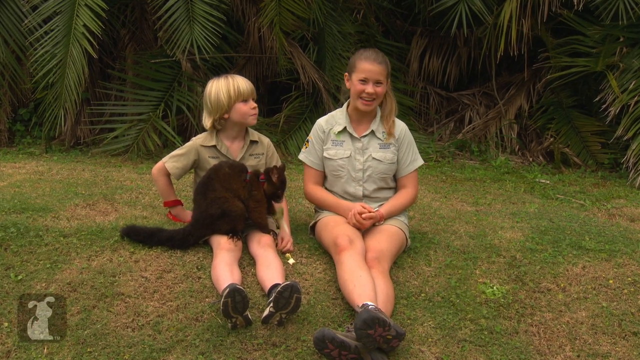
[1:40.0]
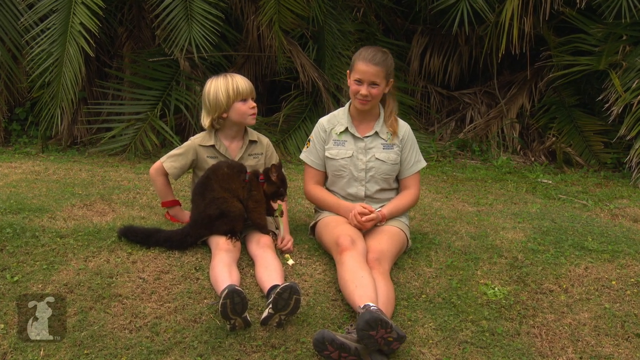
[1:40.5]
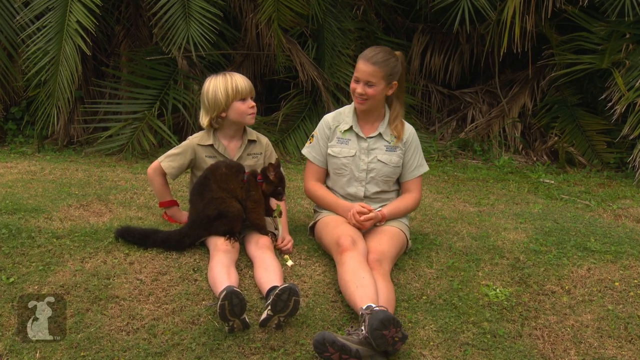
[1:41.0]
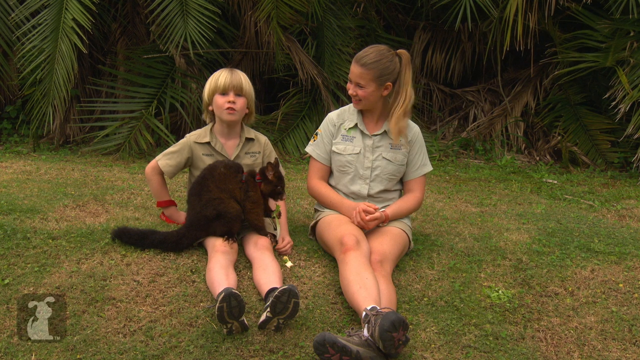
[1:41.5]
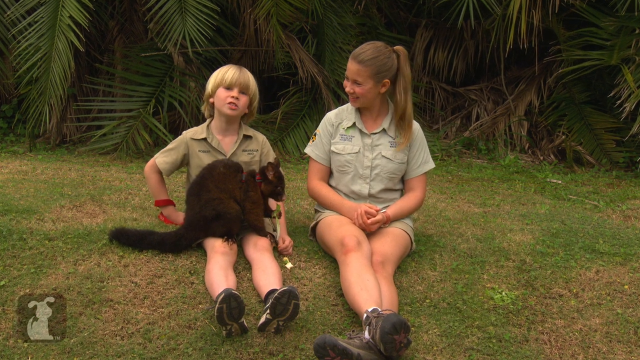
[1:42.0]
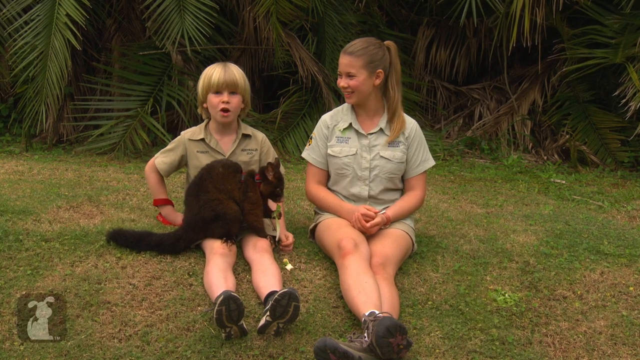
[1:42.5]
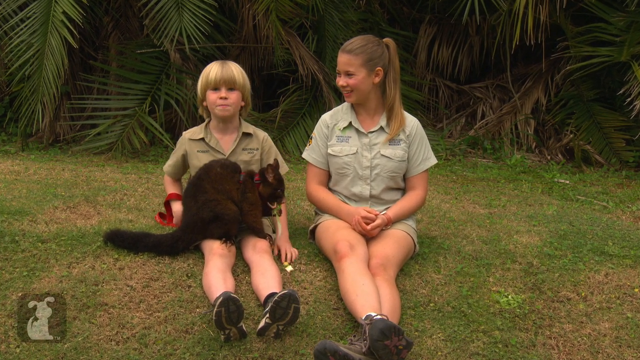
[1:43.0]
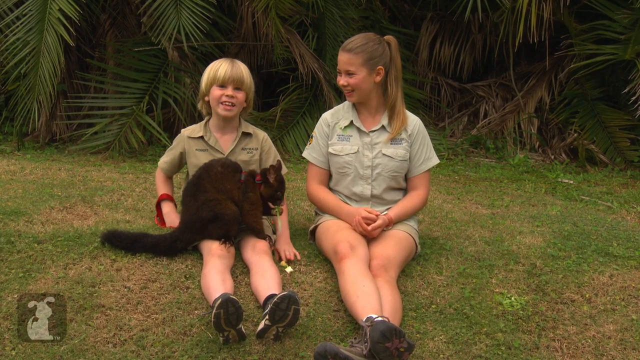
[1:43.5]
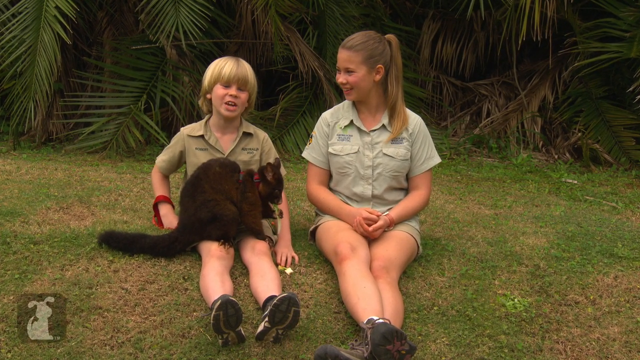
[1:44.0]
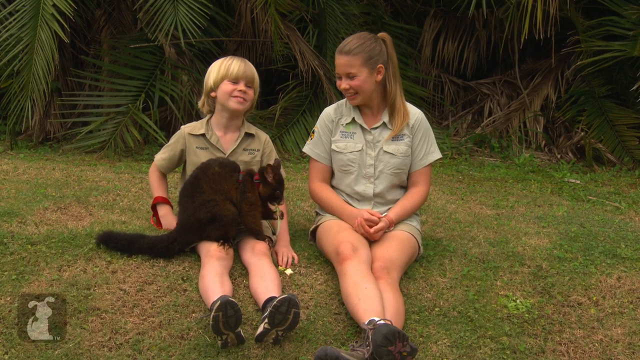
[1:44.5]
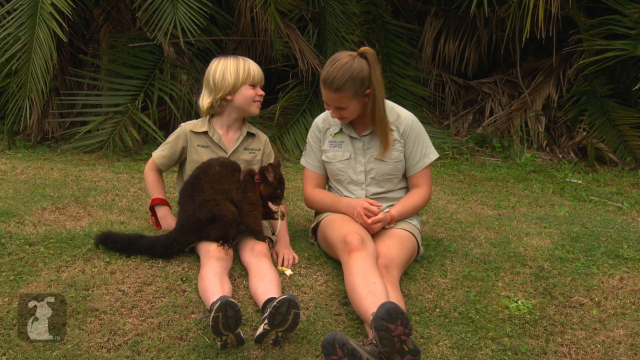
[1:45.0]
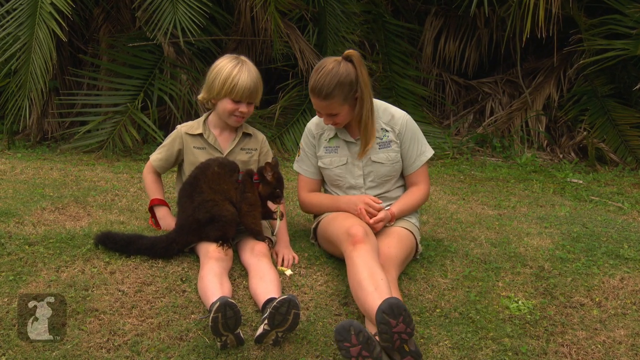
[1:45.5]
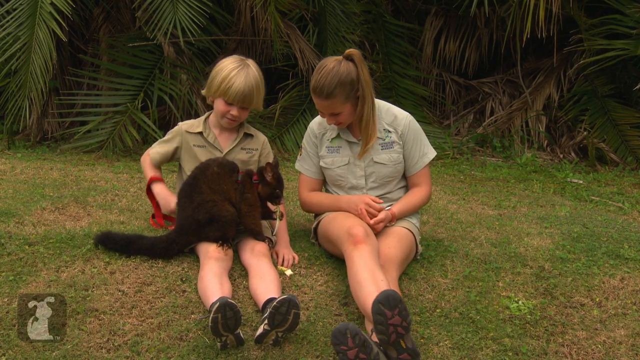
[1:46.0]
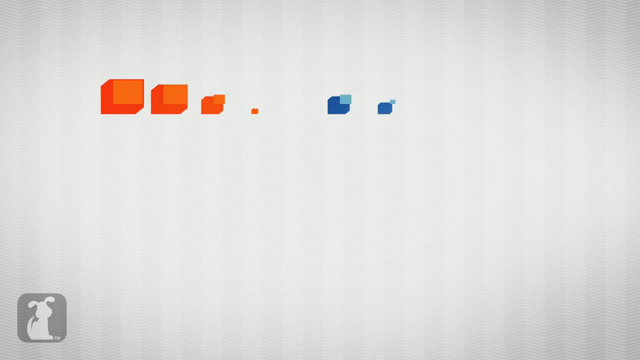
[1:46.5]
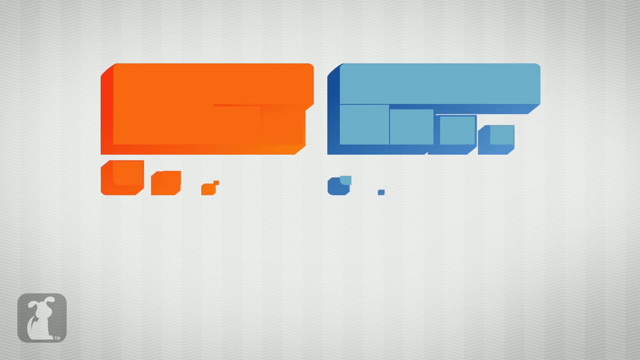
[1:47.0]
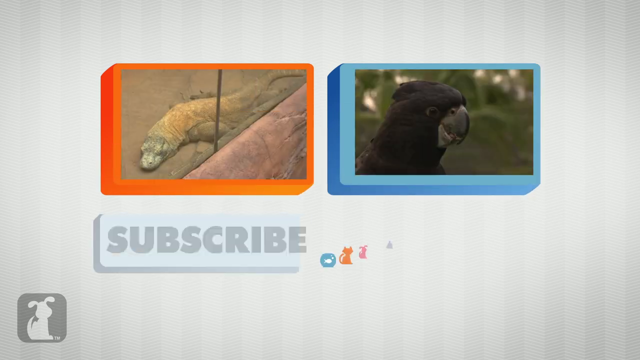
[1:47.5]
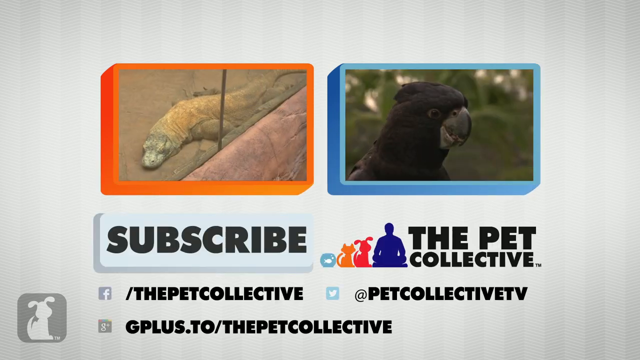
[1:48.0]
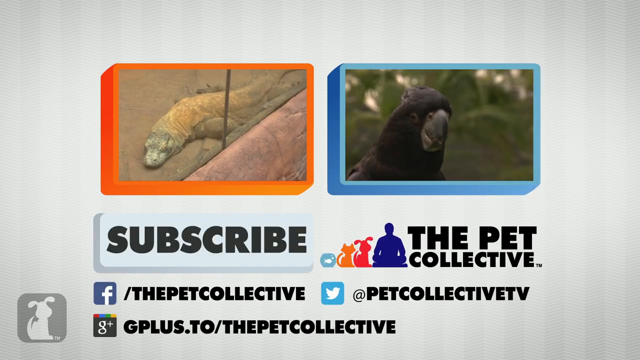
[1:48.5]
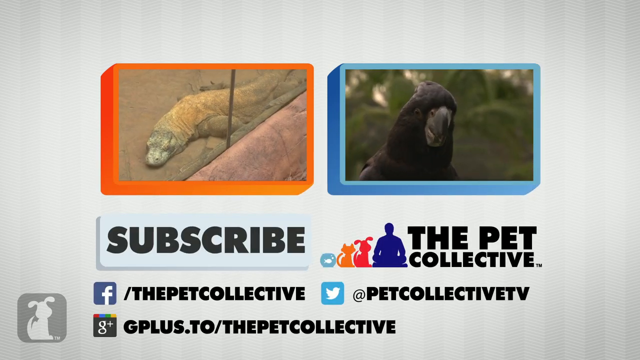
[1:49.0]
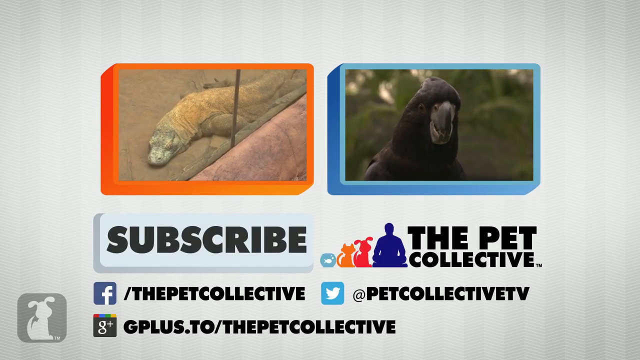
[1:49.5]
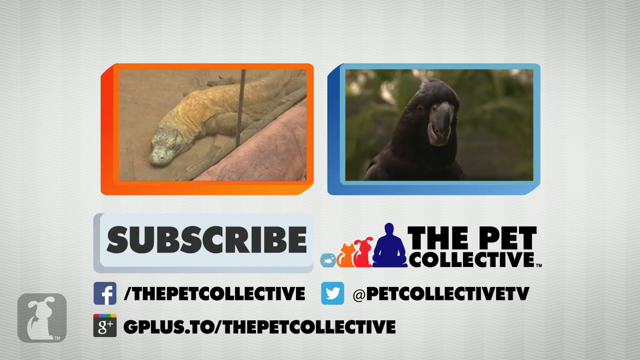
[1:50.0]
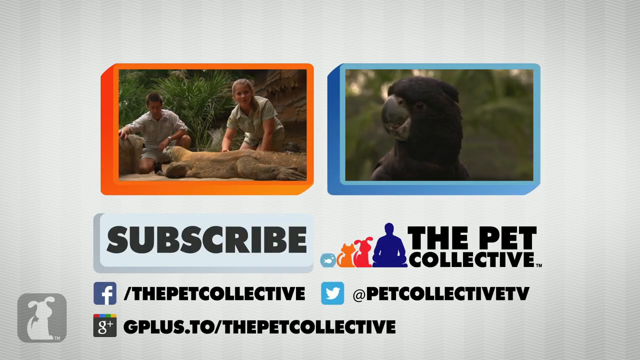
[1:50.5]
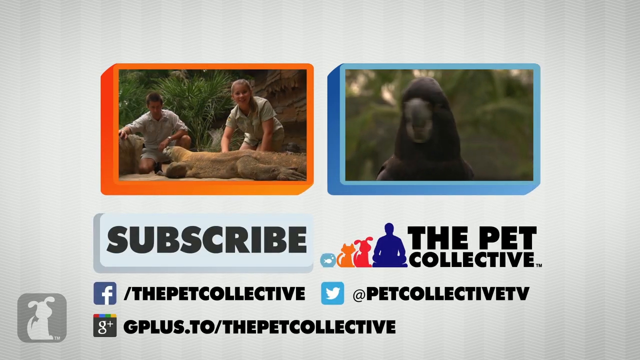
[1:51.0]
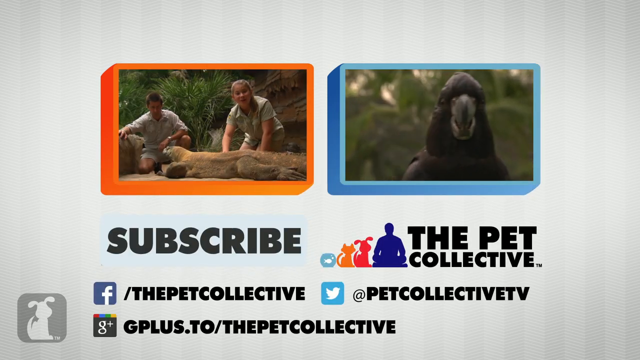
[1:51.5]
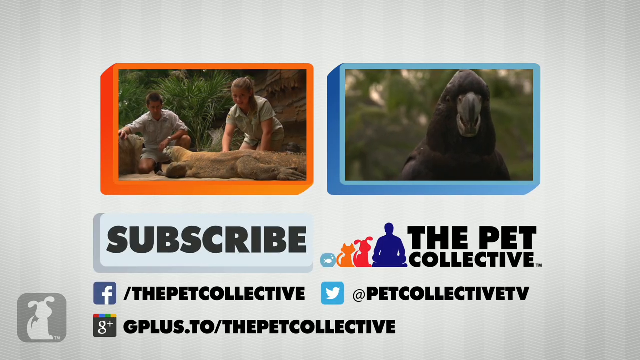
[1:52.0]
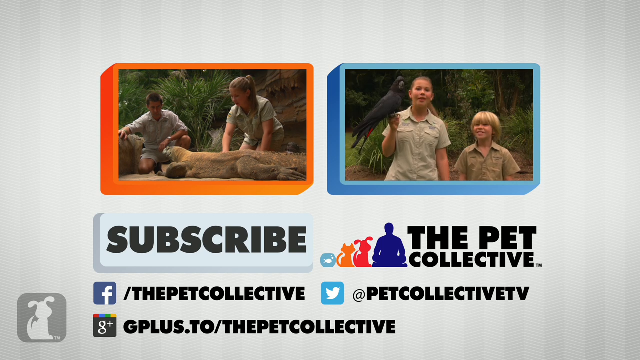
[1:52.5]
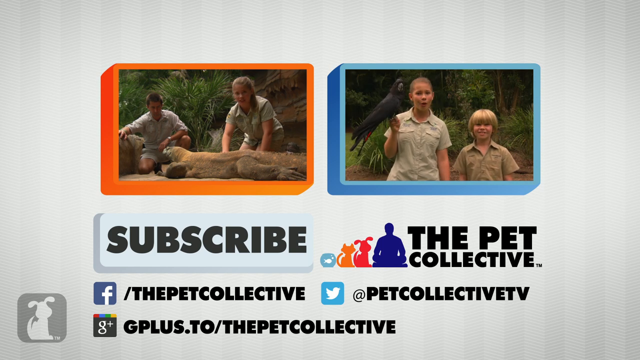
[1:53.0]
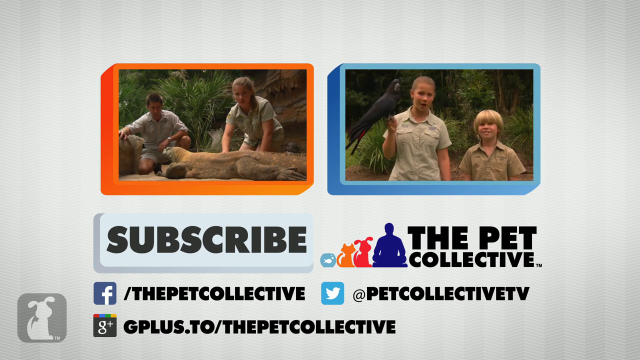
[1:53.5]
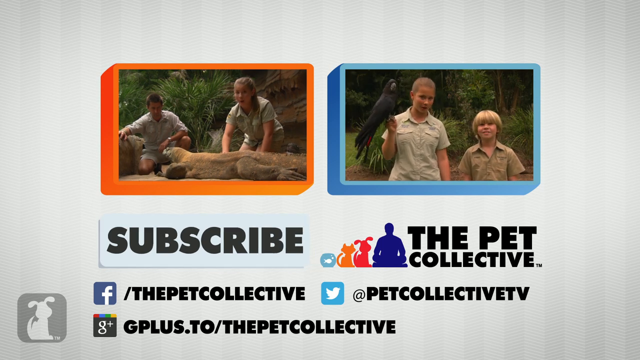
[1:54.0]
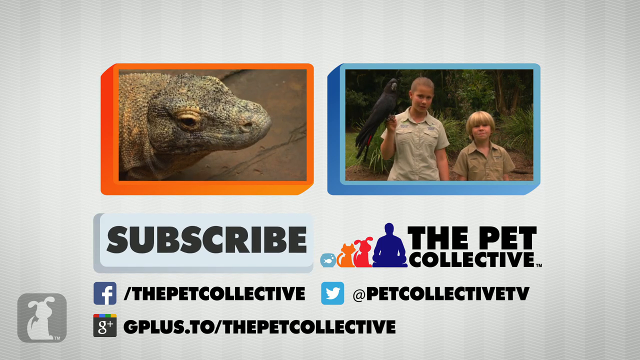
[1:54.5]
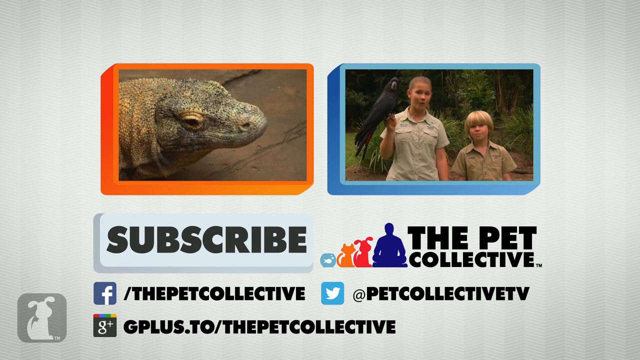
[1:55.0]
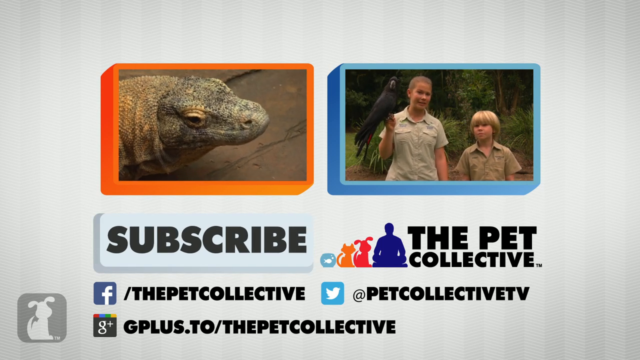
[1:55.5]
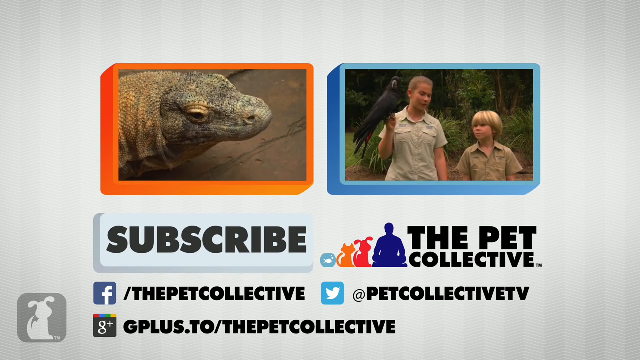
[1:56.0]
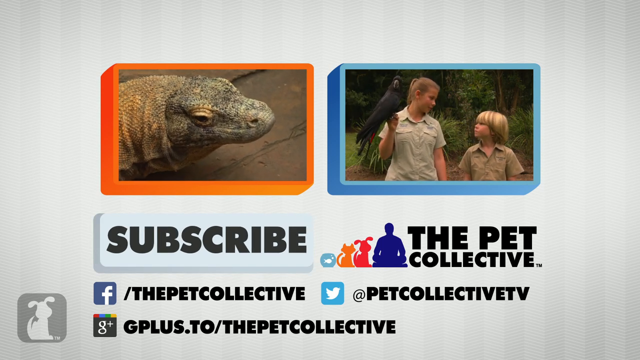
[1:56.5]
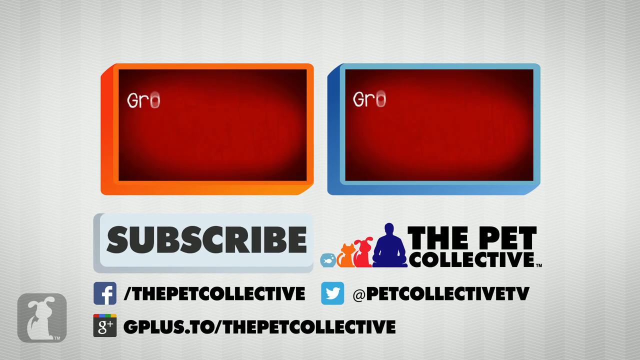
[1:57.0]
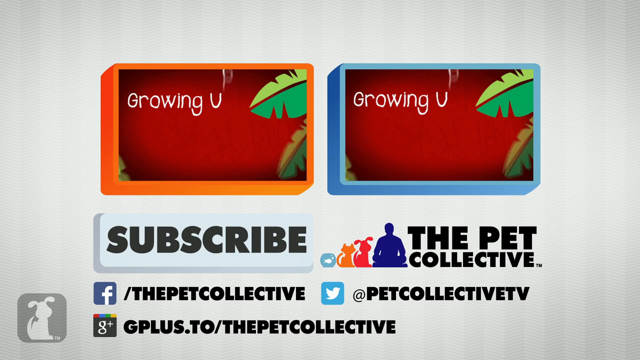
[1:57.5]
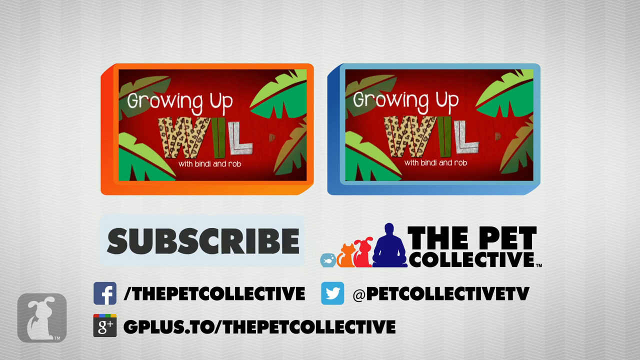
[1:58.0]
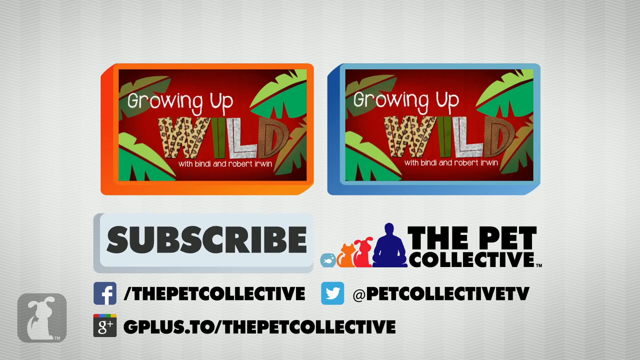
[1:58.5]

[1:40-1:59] In a sunny setting, the young boy and young girl, in greenish-tan shorts and button-up shirts, hold the possum on a red leash and talk about it. The video then transitions to a white background with two icons, one with a blue border and one with an orange border, each reading "growing up wild" over an illustrated setting of green leaves. Below them is the text "subscribe," along with an icon reading "the pet collective," presumably the name of the organization, and Facebook, Twitter, and Google Plus icons.